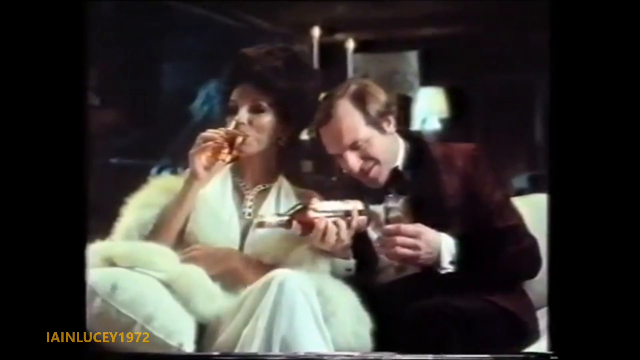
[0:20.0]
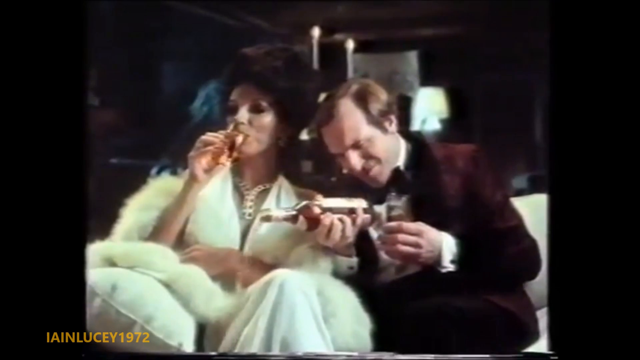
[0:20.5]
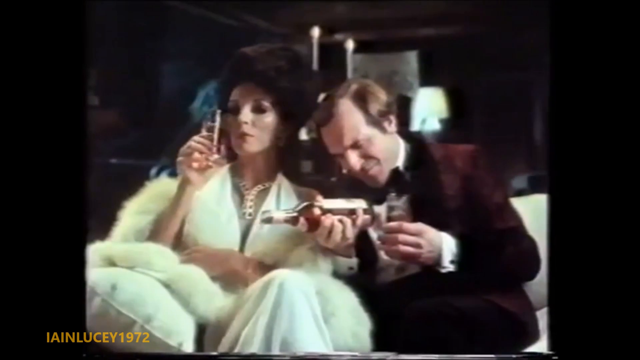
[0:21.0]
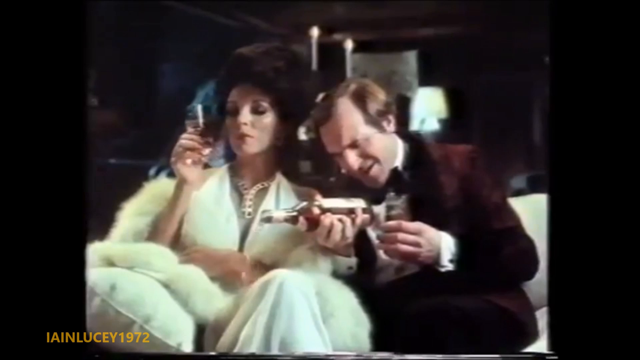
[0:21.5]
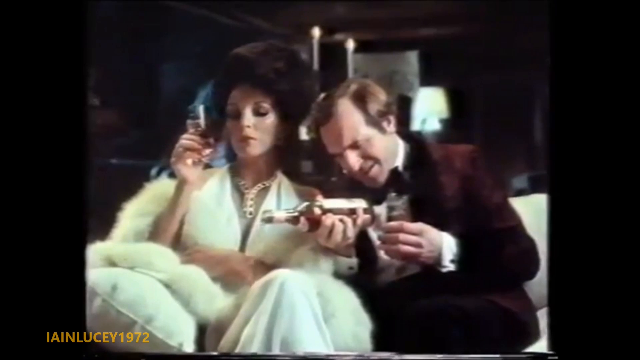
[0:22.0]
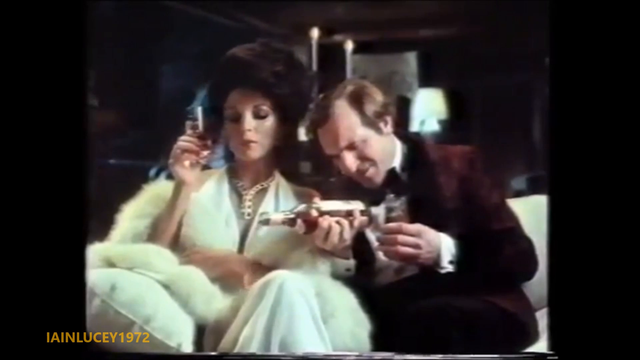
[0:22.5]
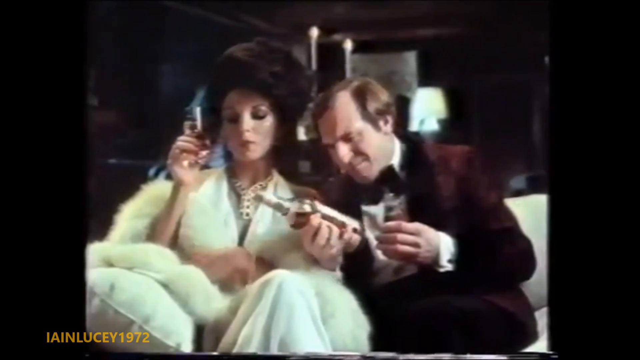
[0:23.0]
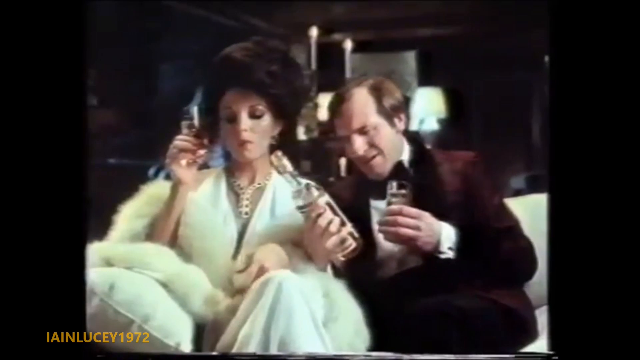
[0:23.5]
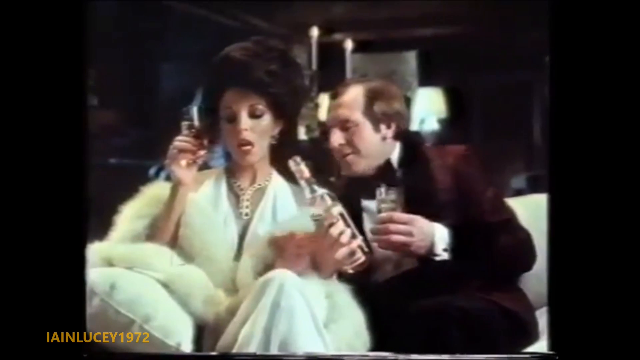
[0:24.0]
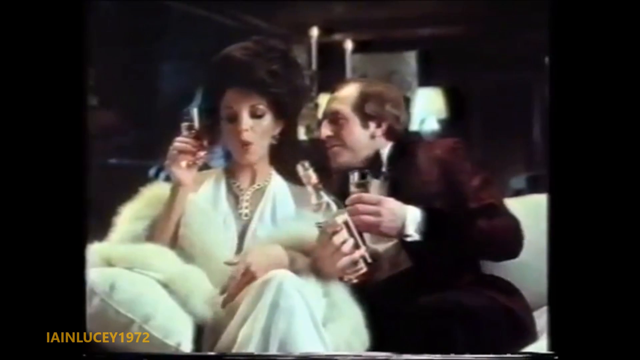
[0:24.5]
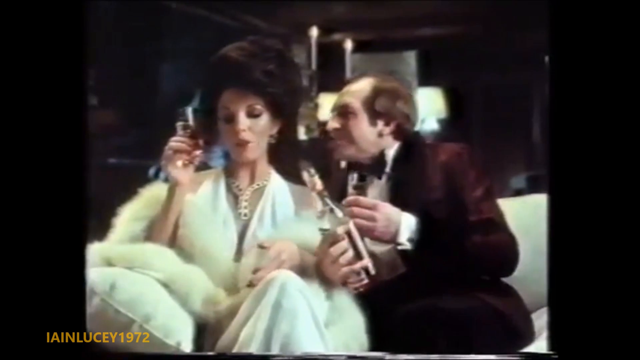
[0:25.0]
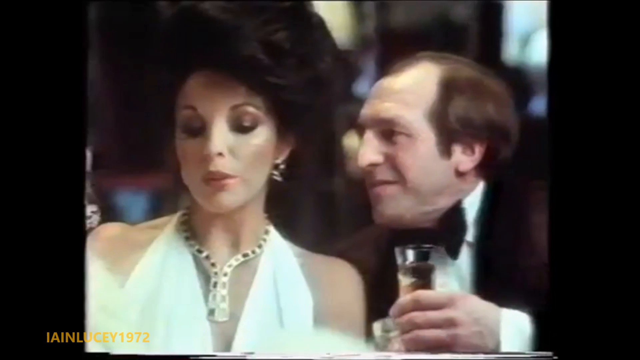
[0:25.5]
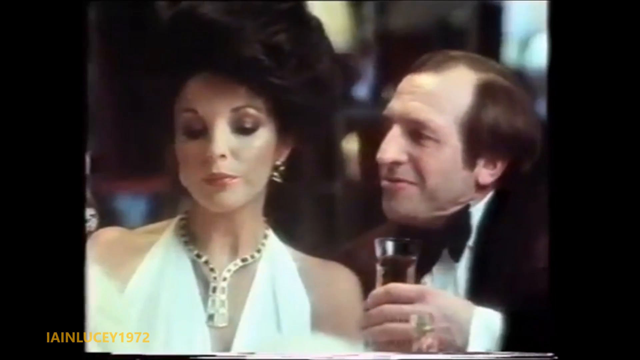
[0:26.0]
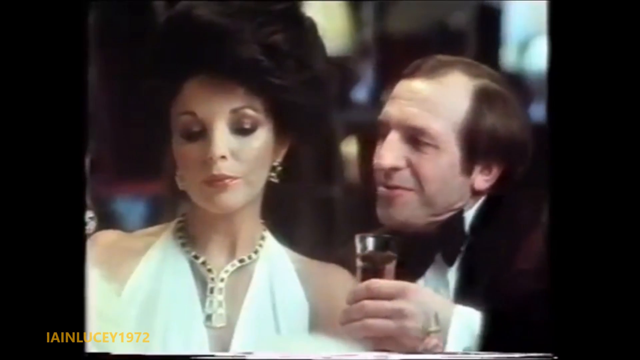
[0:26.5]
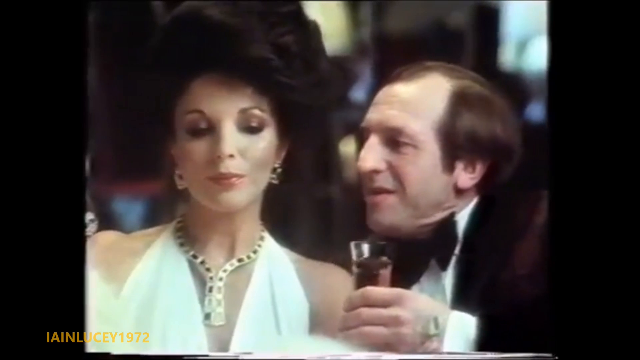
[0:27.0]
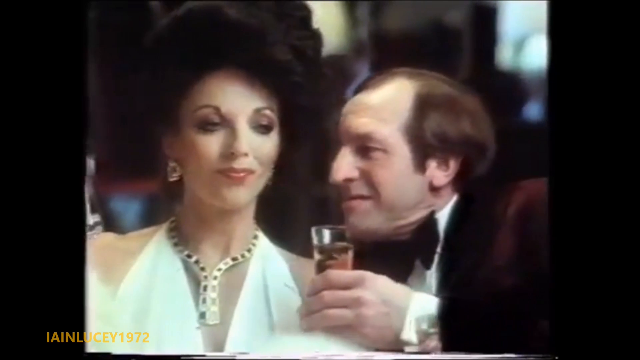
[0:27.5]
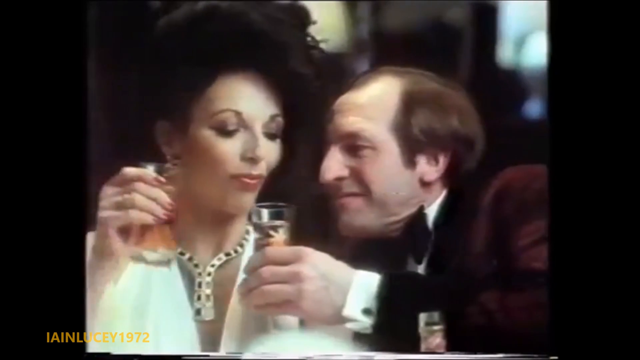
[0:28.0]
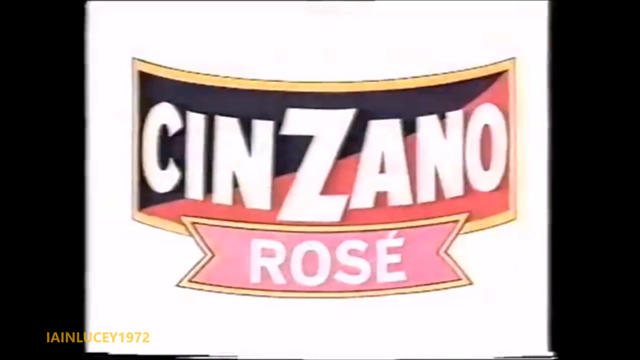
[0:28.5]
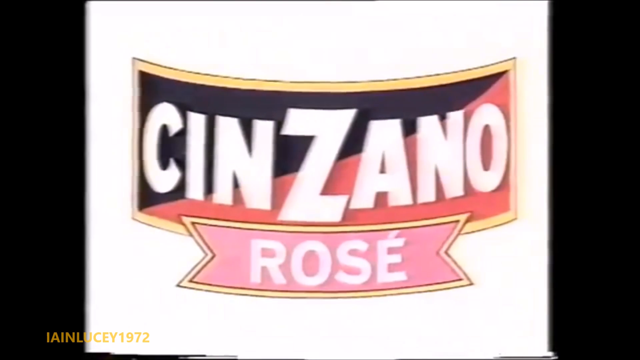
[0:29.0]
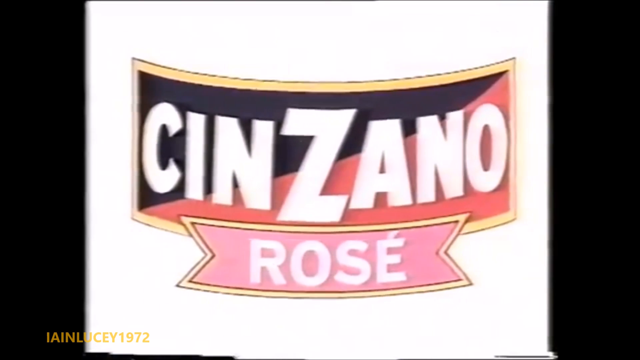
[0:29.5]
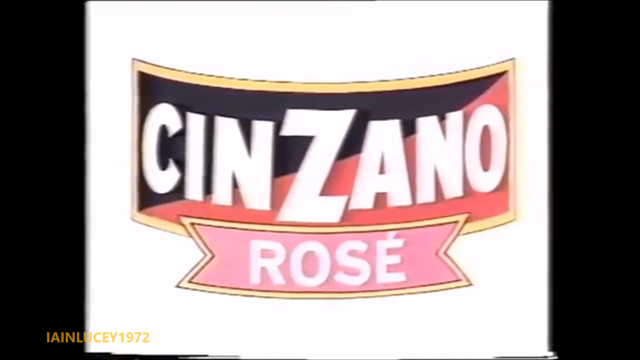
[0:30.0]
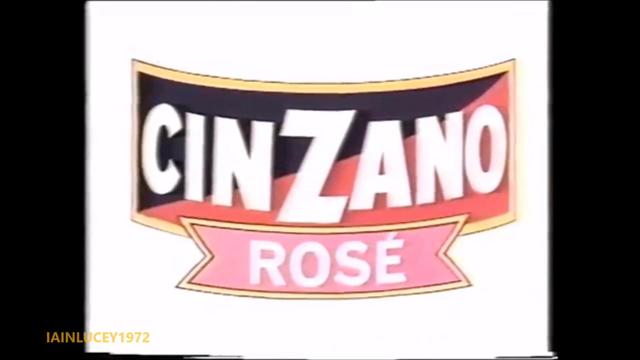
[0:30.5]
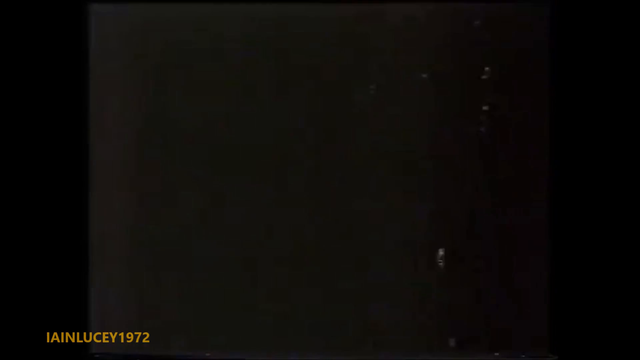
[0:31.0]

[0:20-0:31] The man in the tuxedo spills a drink from the bottle into the lap of the woman in the fur coat. The fur coat is white and woolly. The man has light brown hair and wears a wine-colored tuxedo, a black bow tie over a white shirt, and black cufflinks. The woman is a brunette with a pendant around her neck; she holds a glass in one hand as she watches the man spill the drink onto her lap. One of them is now sipping from a glass cup. The woman calmly brushes her lap. The video then zooms in as the man holds his cup up to the woman while she smiles; he appears to be making a toast. They clink their glasses. The video transitions to a logo that says "cinzano rose" on a white background.